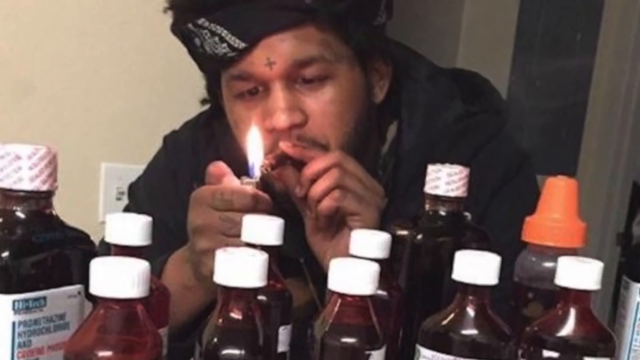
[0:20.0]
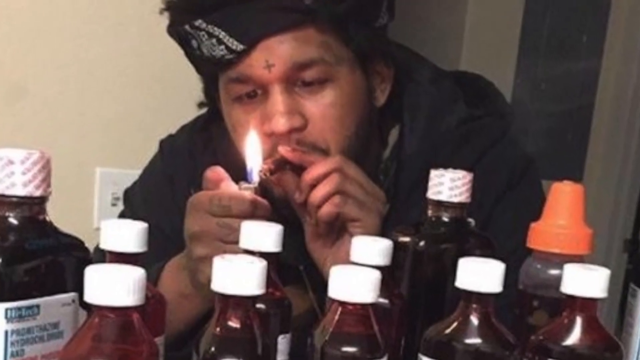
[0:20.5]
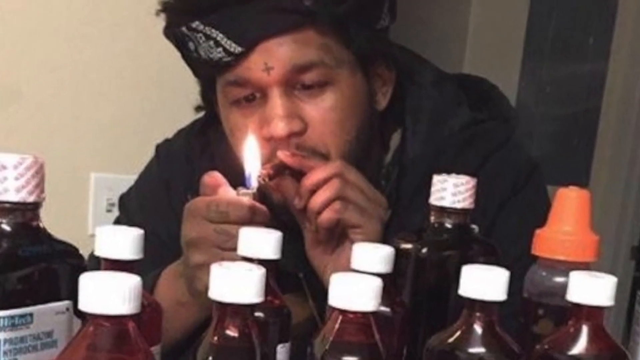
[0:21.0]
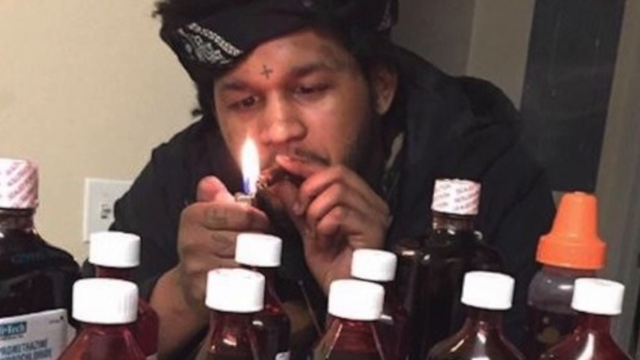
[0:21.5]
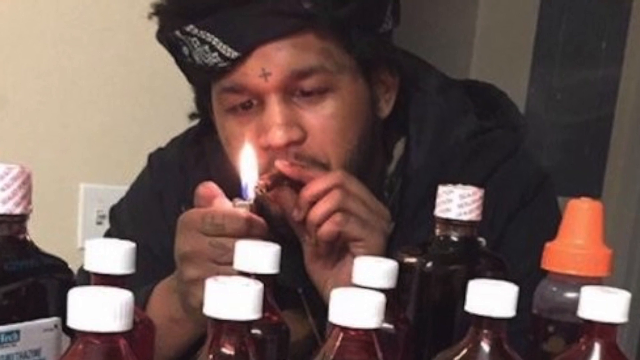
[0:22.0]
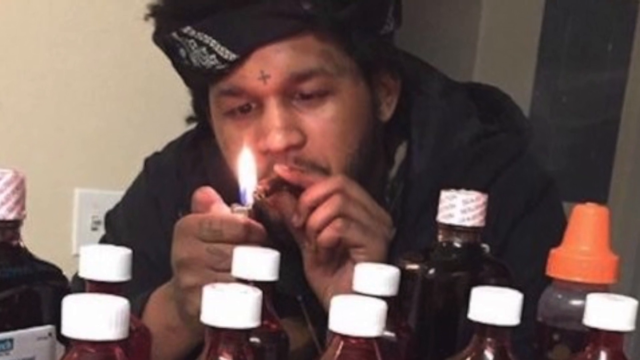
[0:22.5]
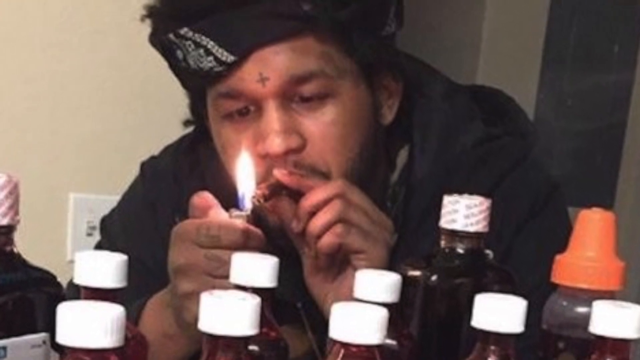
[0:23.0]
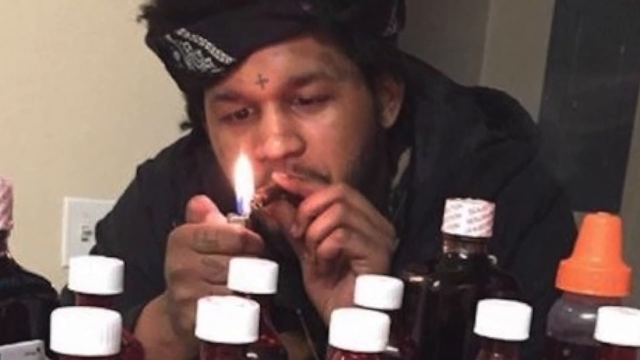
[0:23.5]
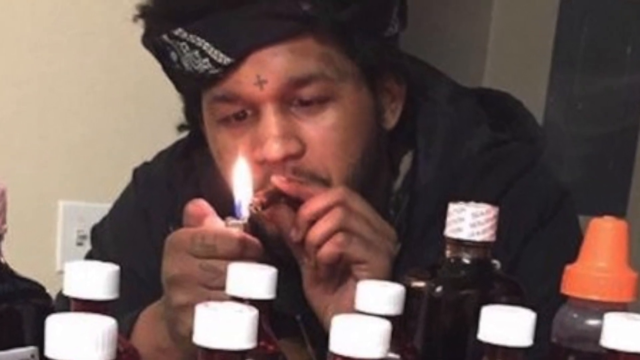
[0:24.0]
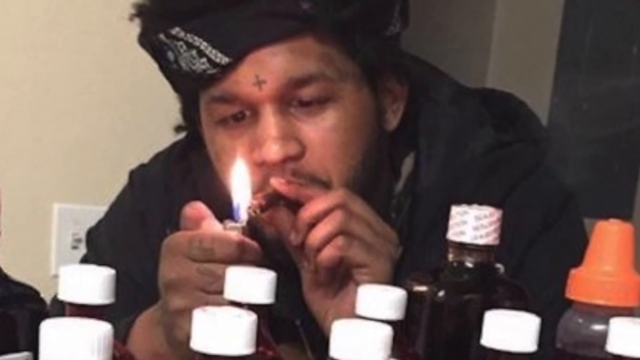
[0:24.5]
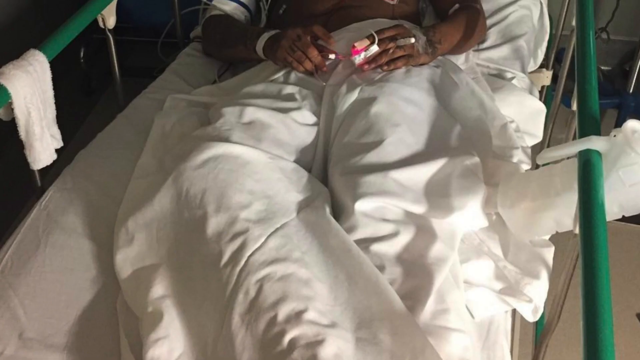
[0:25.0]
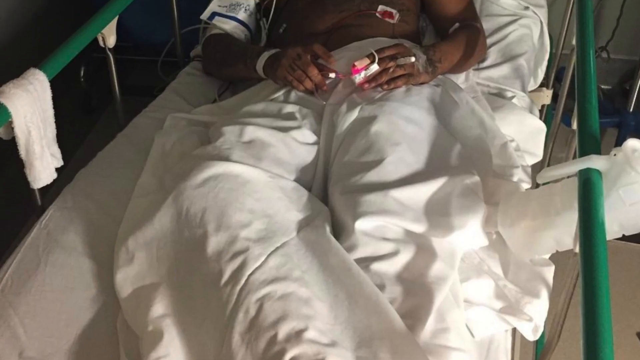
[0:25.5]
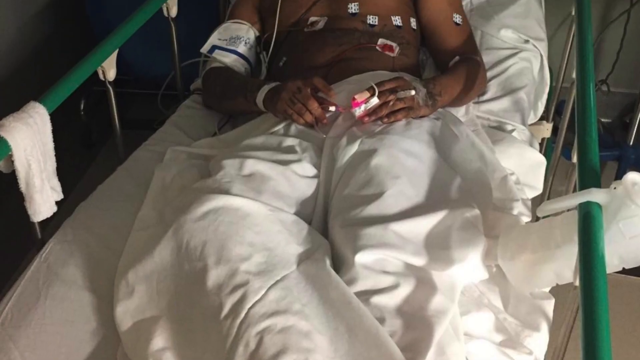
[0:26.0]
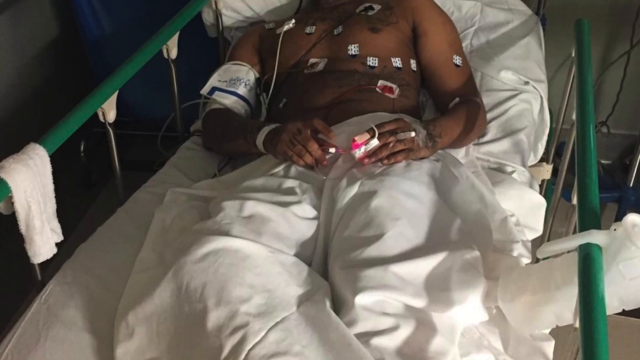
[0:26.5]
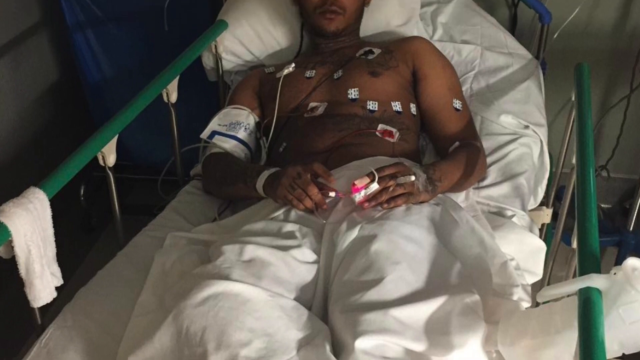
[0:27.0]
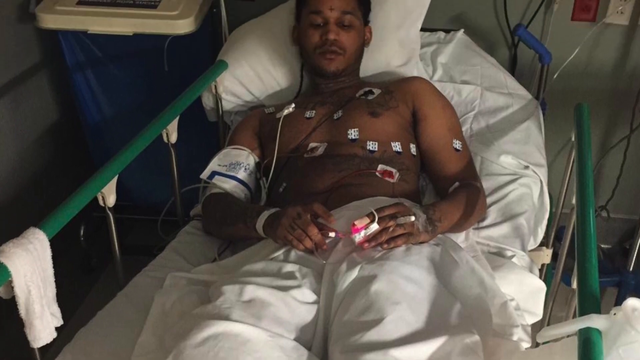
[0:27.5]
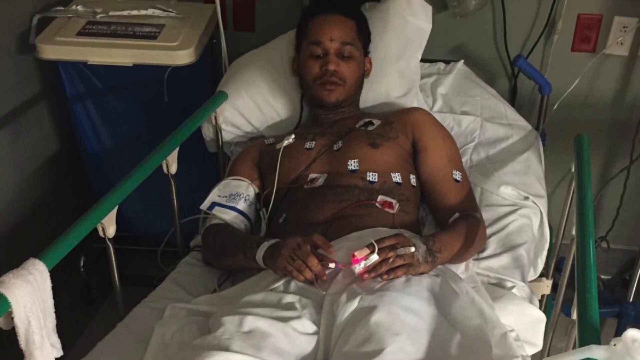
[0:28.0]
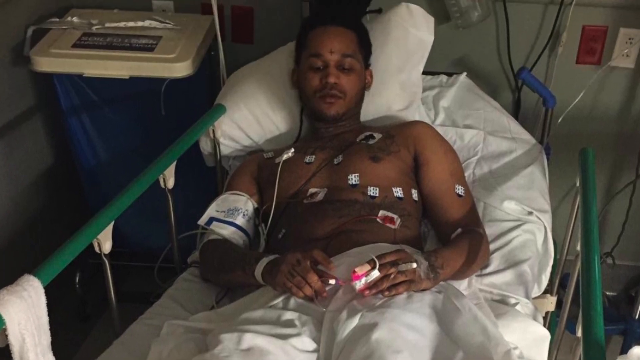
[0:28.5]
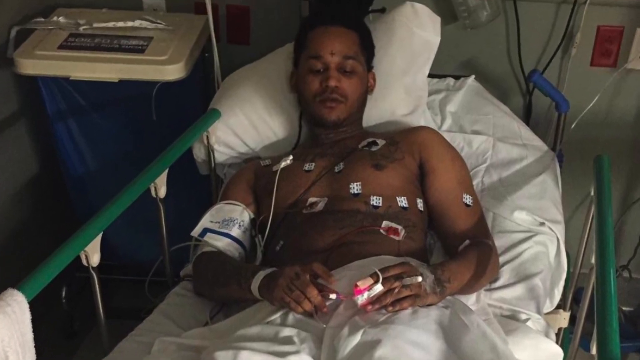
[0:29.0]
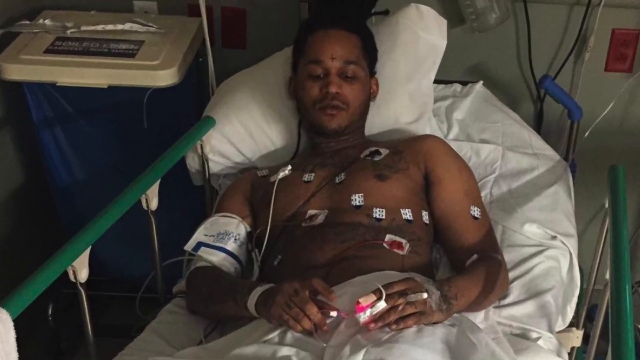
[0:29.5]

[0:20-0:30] A man lights up a brown cigar, holding it in his left hand between his index finger and thumb while his other hand holds up a lighter, its flame right in front of the cigar and his face. He has a little cross on his forehead and wears a black bandana and a black shirt. Bottles surround him, most with white lids, maybe about ten of them, plus an orange one on the right with a pointier lid. The camera zooms in on the shot. Then the man is shown in a hospital bed with little stickers on his body. He has no shirt on, has a white cuff around his right arm and a little red thing around the pinky finger of his left hand. Sort of green bars are to his left, and some sort of blue and white wastebasket is in the upper left-hand corner of the screen.